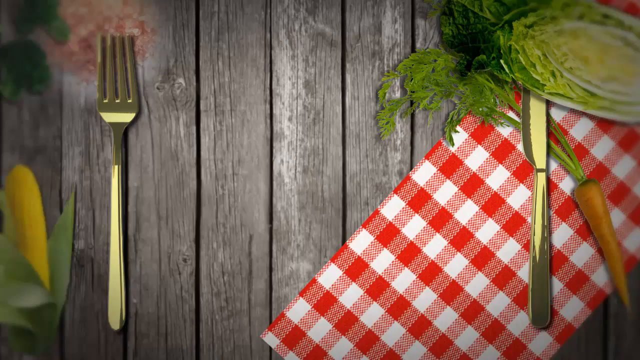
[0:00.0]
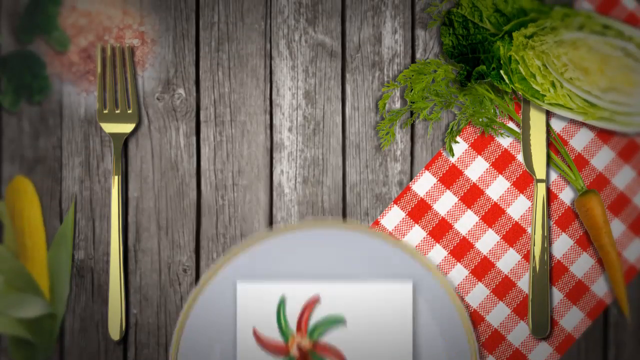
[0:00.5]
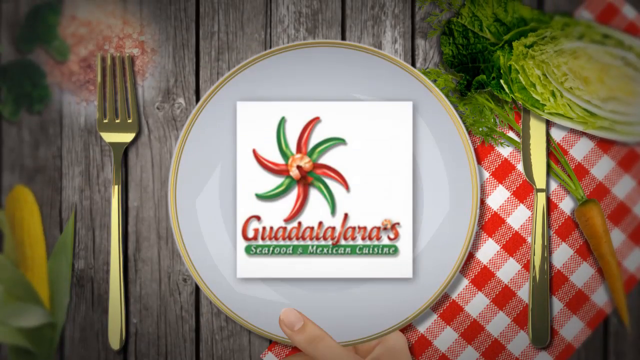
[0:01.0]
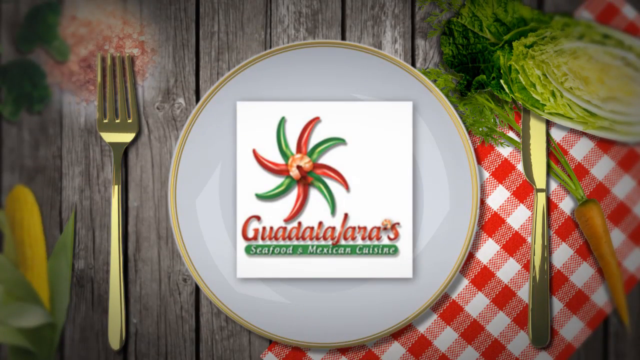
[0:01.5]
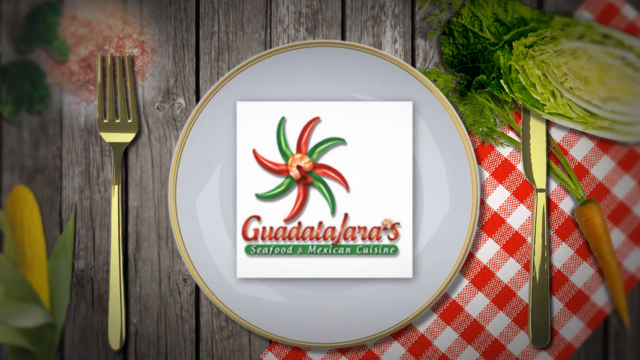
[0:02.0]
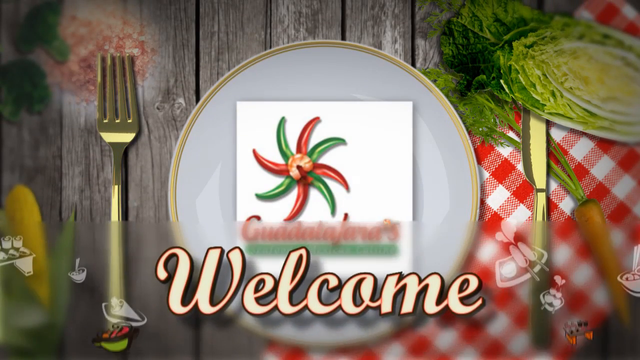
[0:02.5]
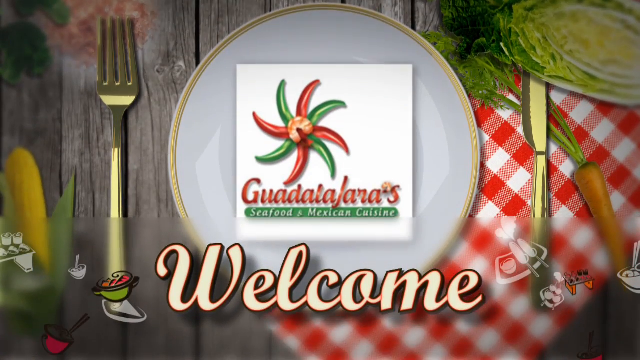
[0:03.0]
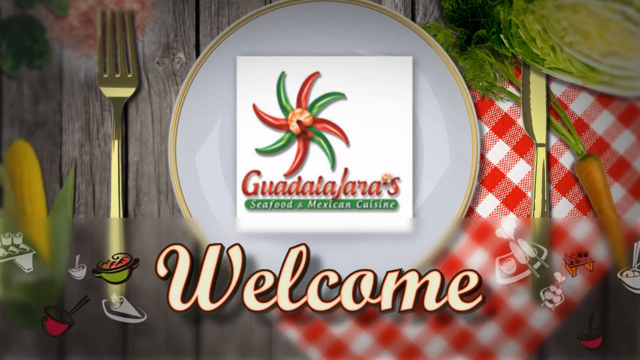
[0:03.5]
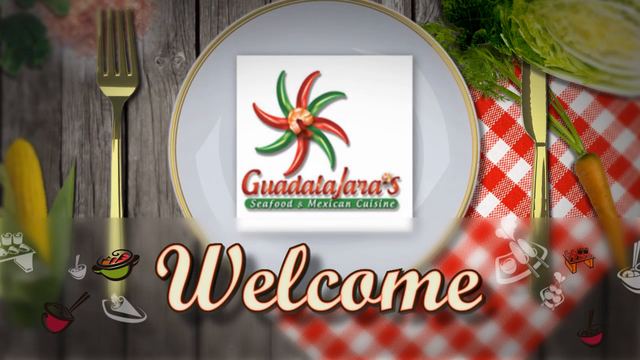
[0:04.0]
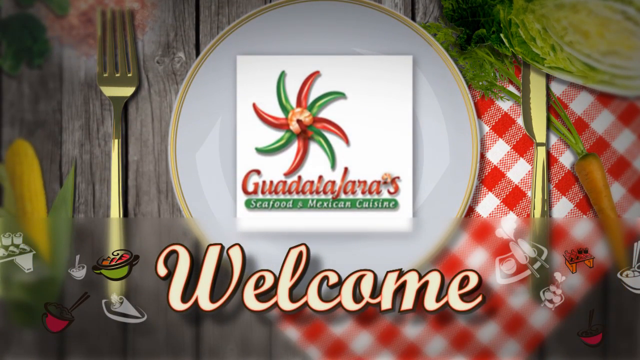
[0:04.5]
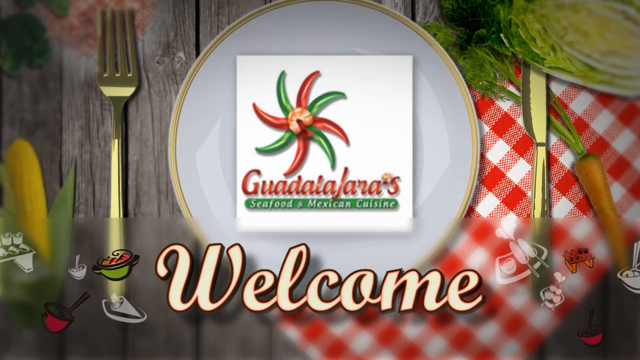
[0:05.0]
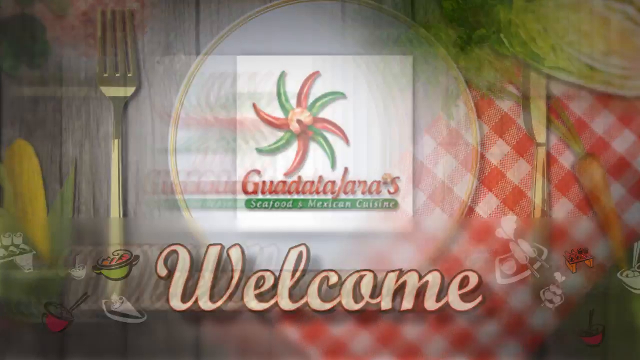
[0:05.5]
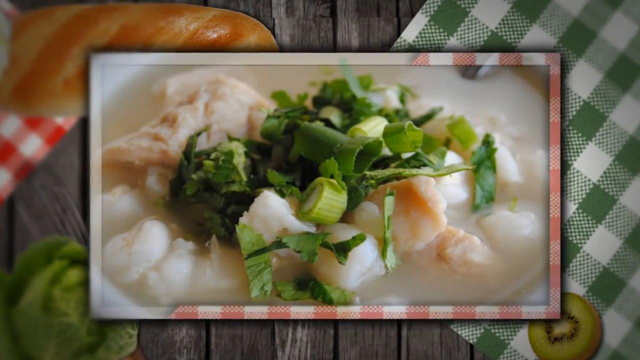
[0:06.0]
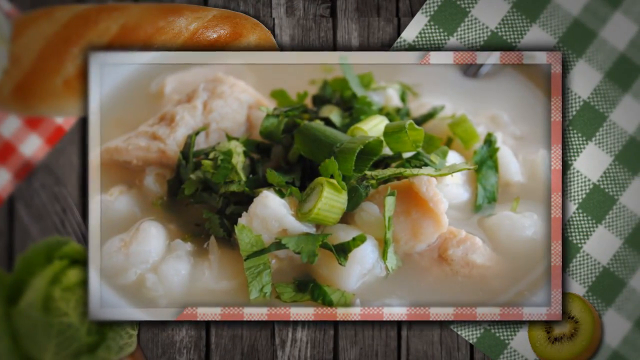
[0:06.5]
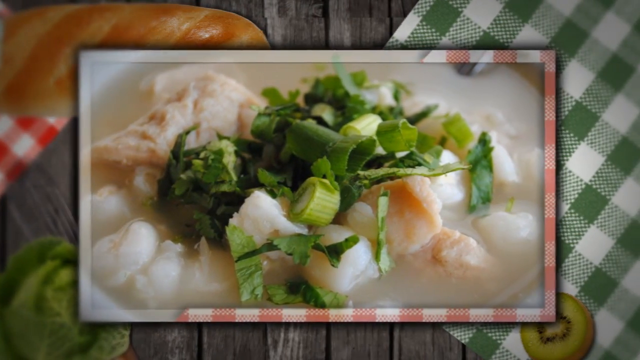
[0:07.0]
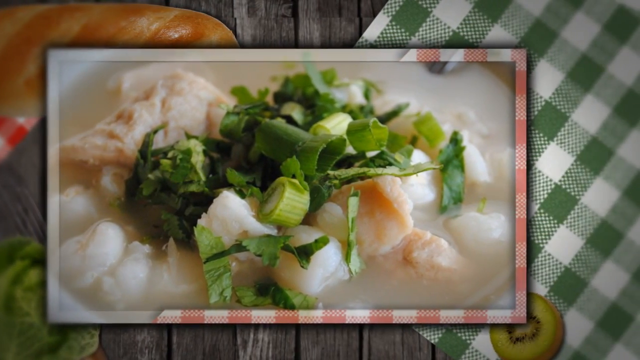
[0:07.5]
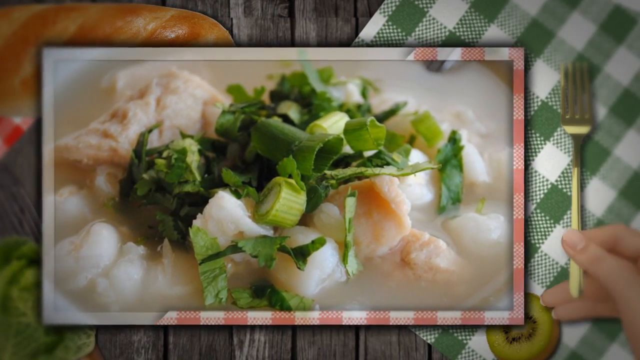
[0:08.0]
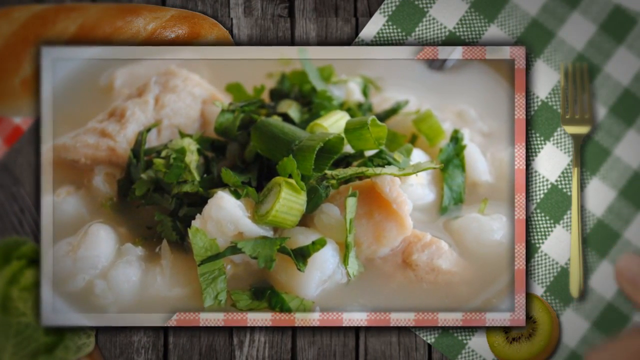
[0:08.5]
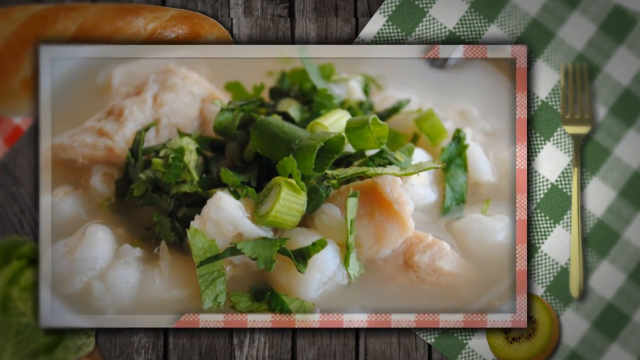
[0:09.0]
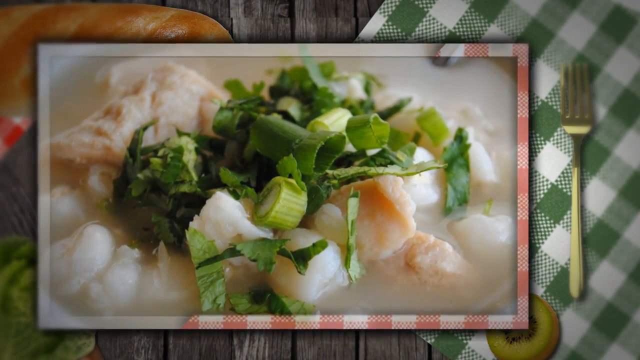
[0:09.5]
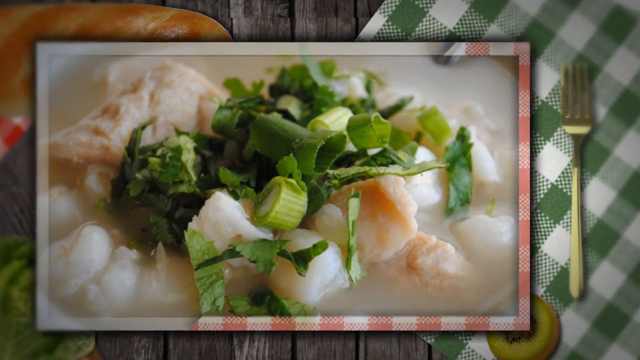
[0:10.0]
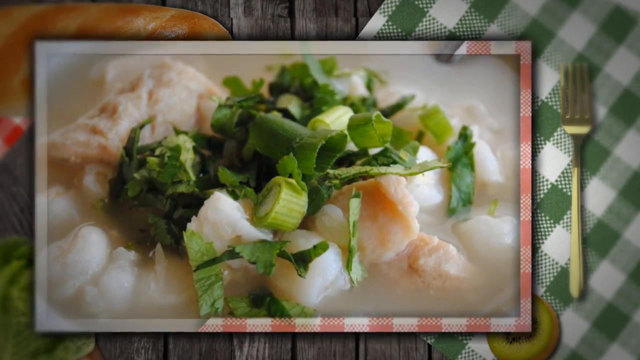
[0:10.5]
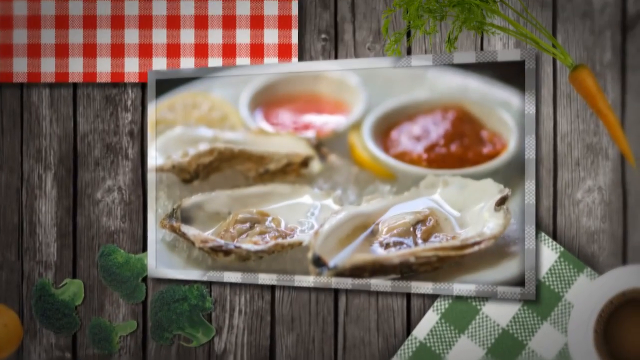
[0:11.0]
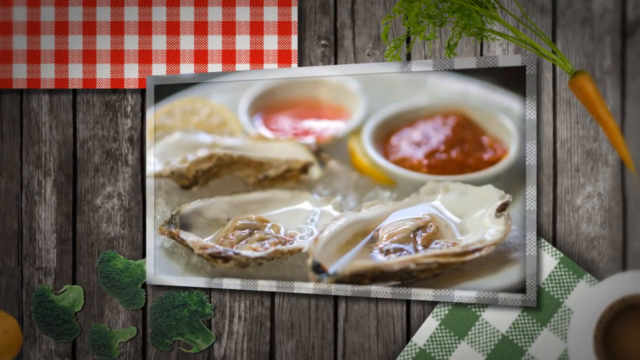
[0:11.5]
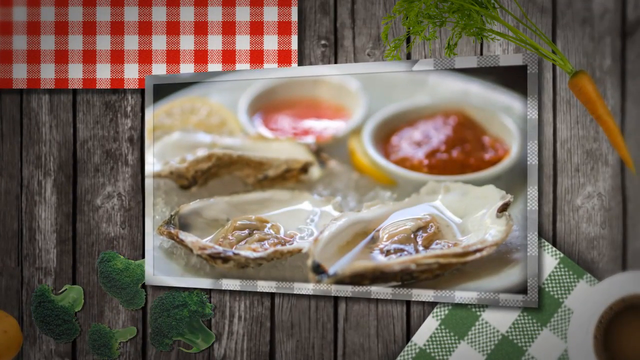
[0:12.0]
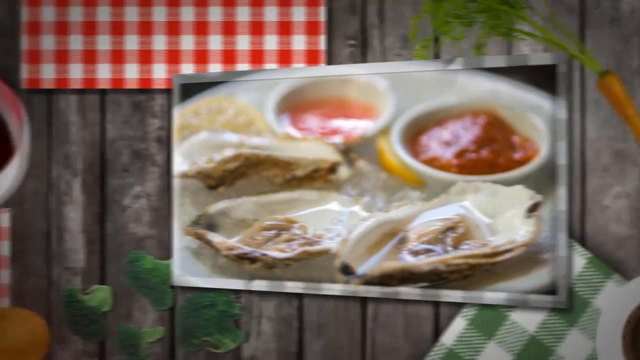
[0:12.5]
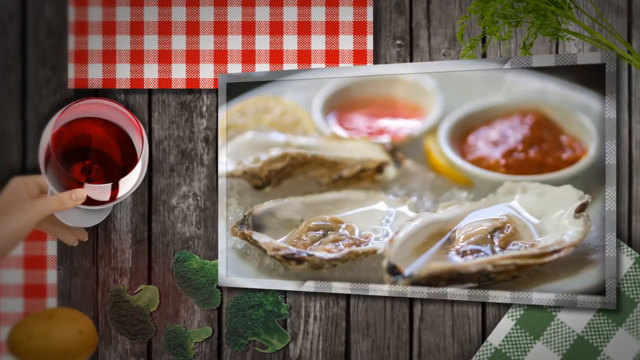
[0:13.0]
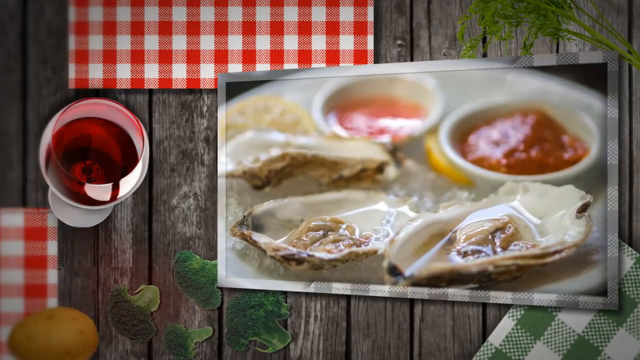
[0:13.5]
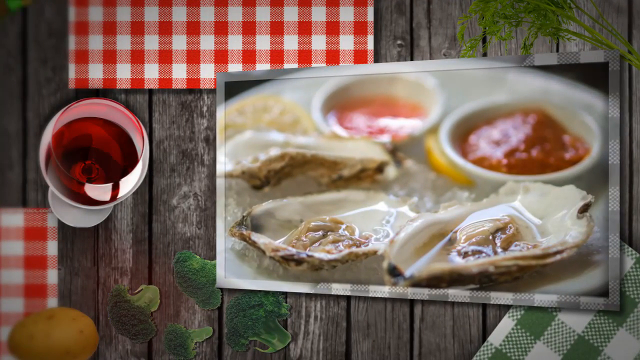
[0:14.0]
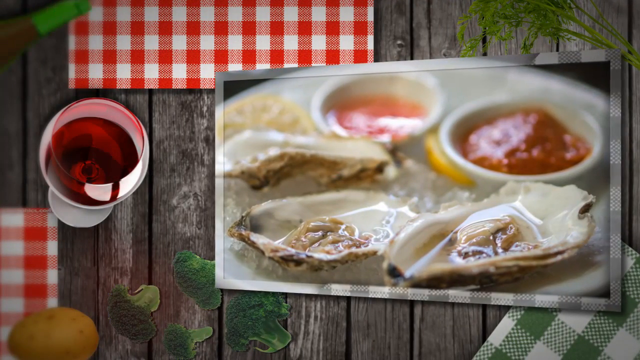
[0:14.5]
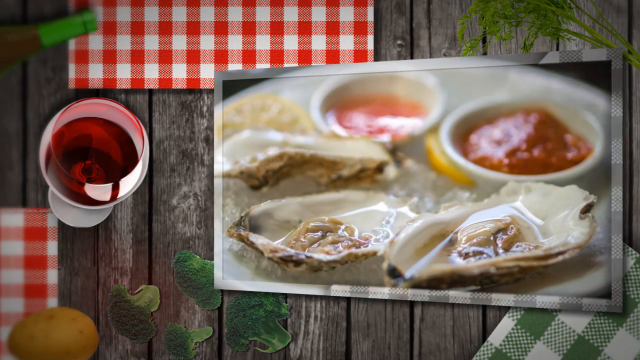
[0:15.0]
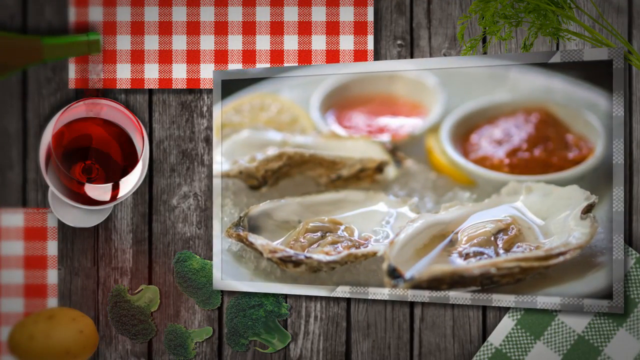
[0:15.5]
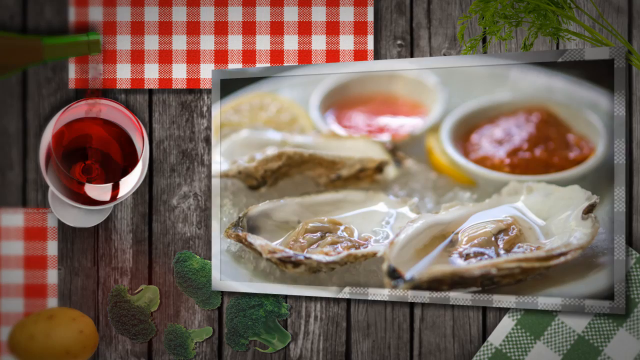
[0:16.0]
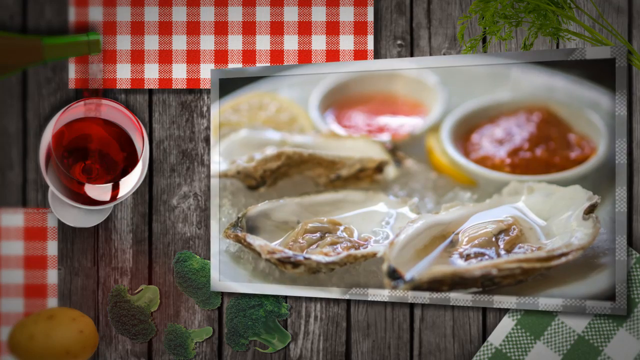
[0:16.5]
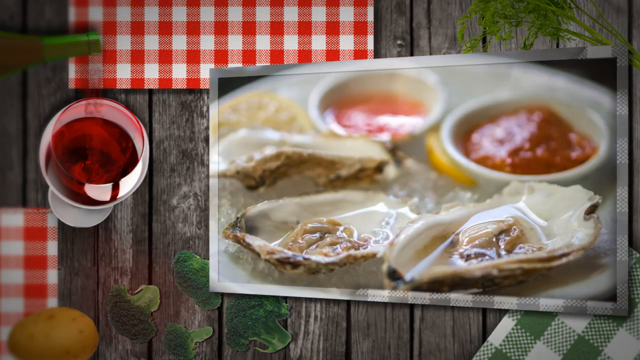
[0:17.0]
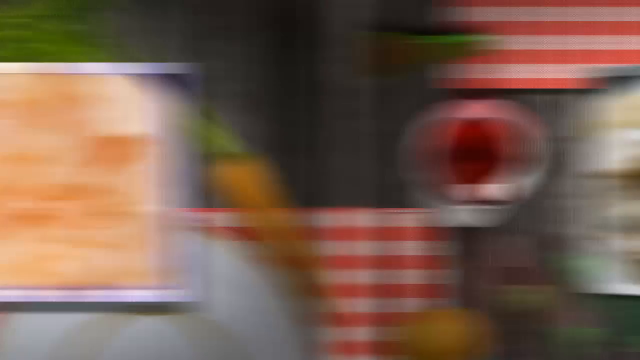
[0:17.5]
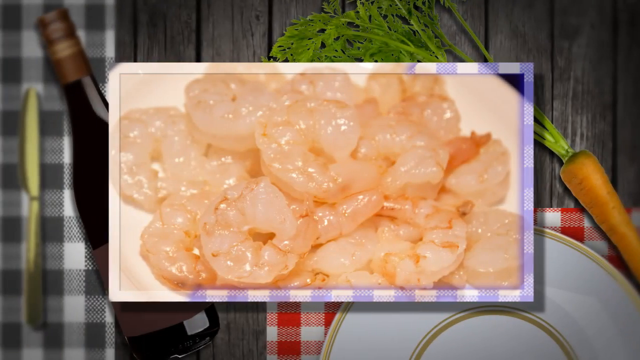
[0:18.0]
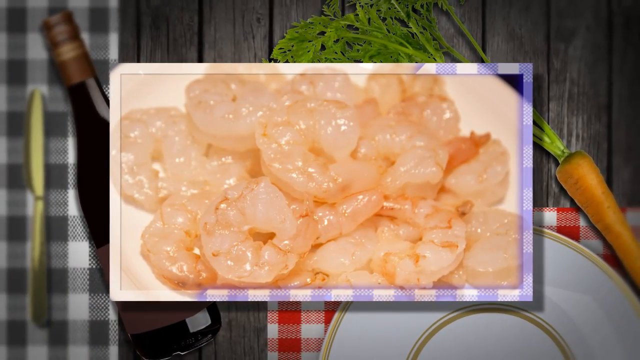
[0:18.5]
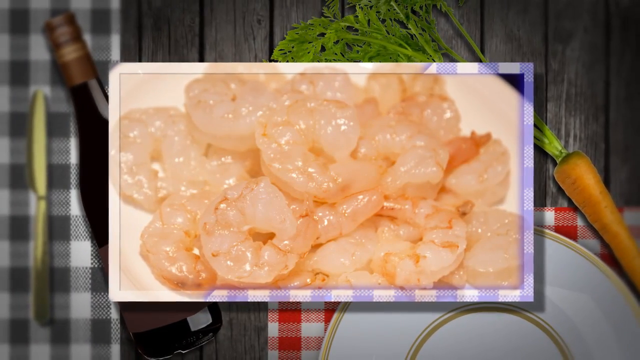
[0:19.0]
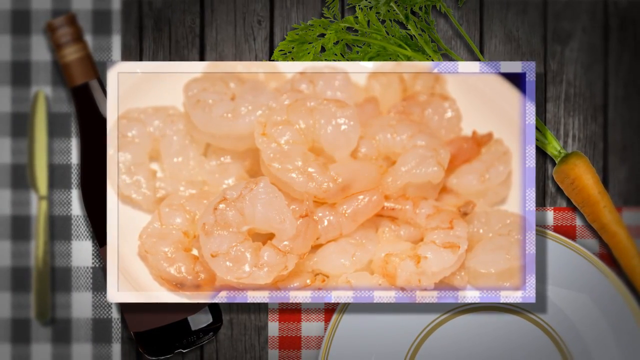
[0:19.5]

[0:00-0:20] The video opens on a plate with a knife on the right and a fork on the left. On the plate is a logo, apparently for a seafood and Mexican cuisine restaurant: green and red peppers arranged in a spiral, a circle, with a shrimp on top. The place is called Guadalajara's. A tablecloth lies on top of what seems to be a wooden fence or table, and there is corn, some lettuce and a carrot. The scene is not in a realistic style and has a somewhat computer-generated look. There is a welcome sign. The scene then switches to what appears to be a boiled seafood soup with a lot of spring onions on top. Next come oysters with two sauces, followed by a lot of cooked shrimp that looks really fresh.